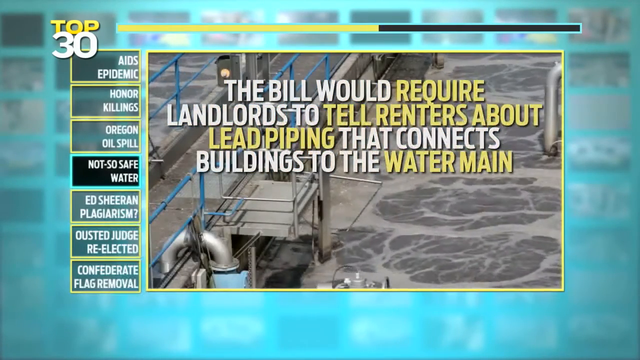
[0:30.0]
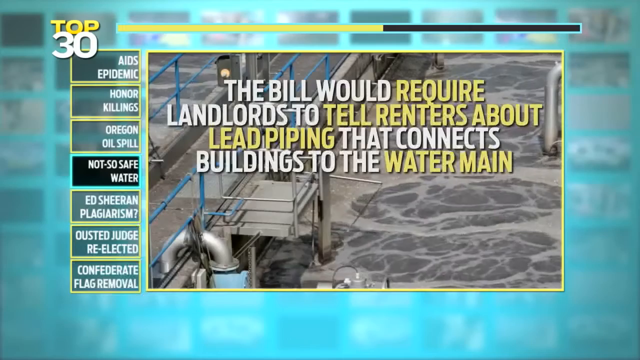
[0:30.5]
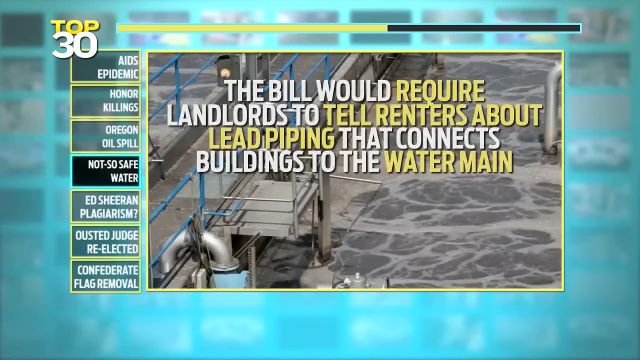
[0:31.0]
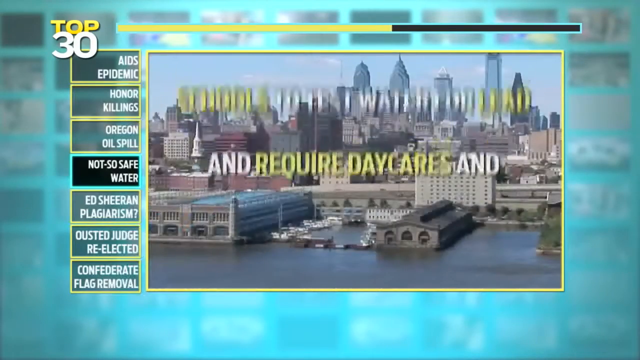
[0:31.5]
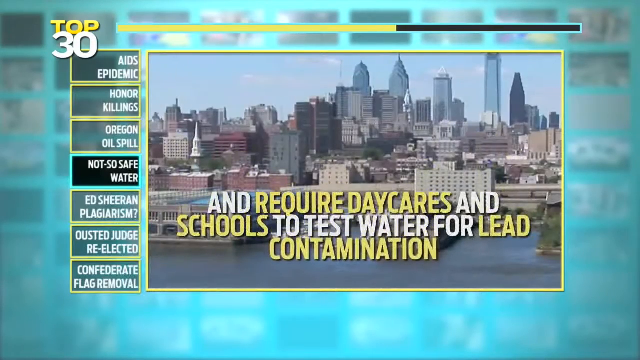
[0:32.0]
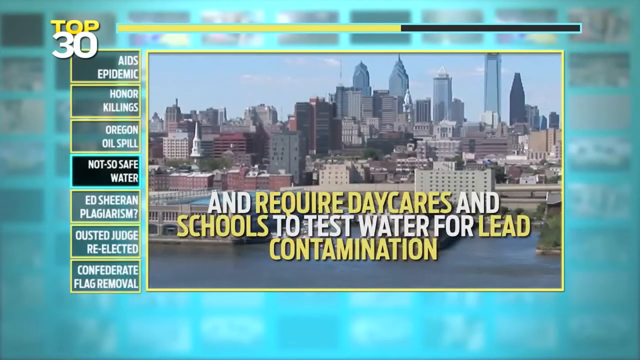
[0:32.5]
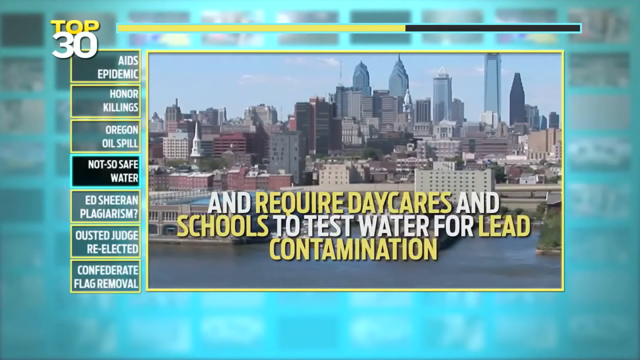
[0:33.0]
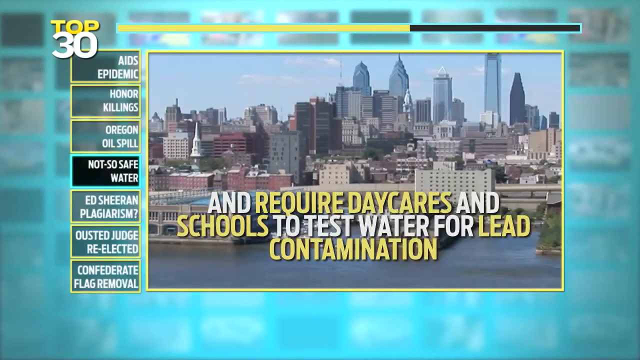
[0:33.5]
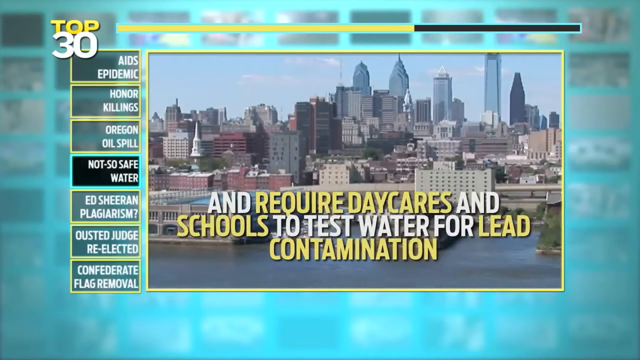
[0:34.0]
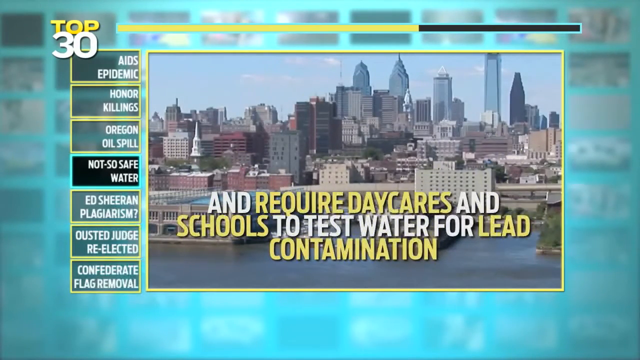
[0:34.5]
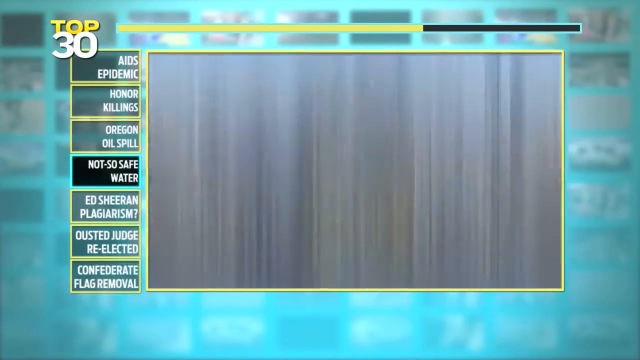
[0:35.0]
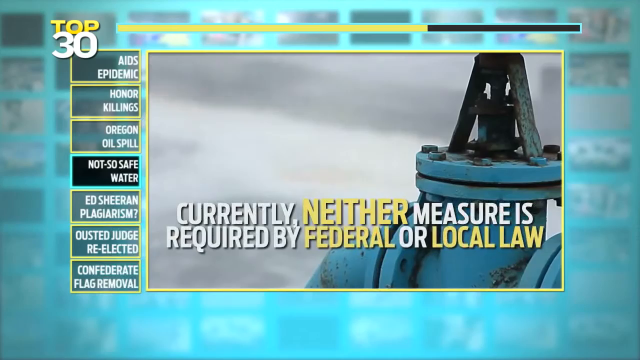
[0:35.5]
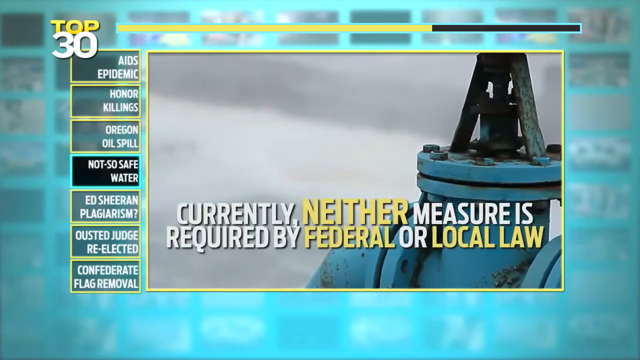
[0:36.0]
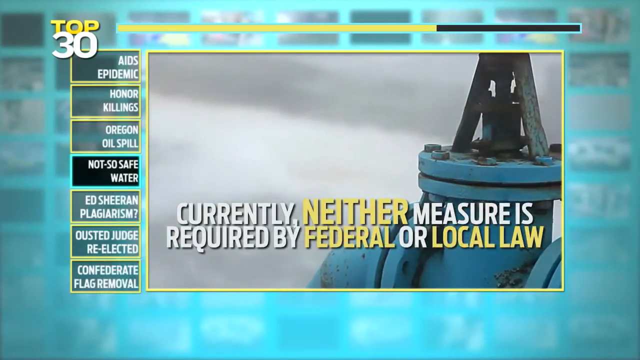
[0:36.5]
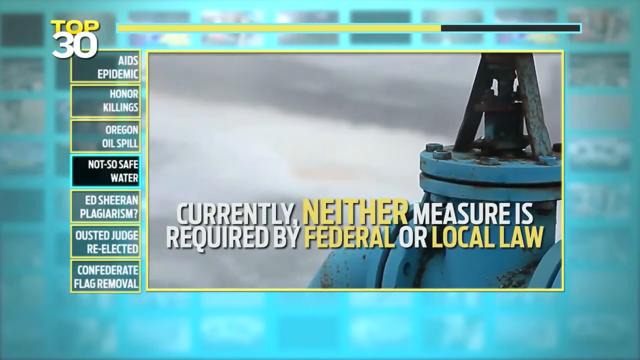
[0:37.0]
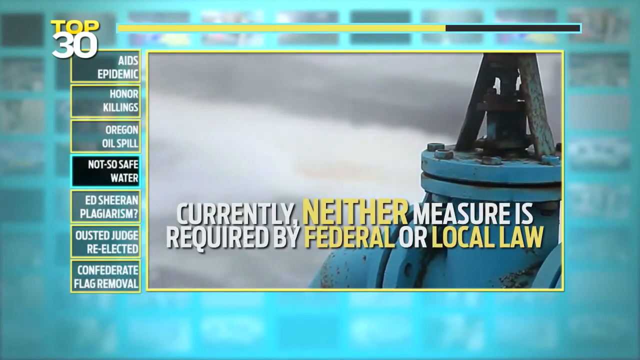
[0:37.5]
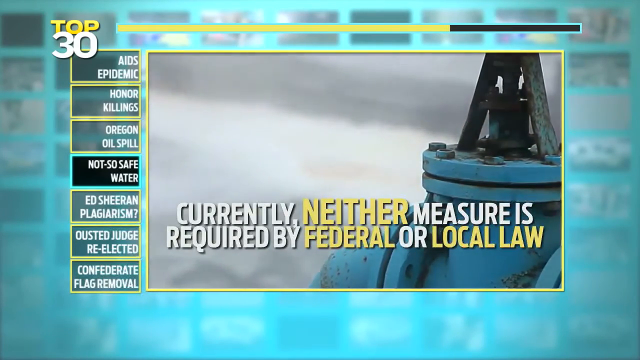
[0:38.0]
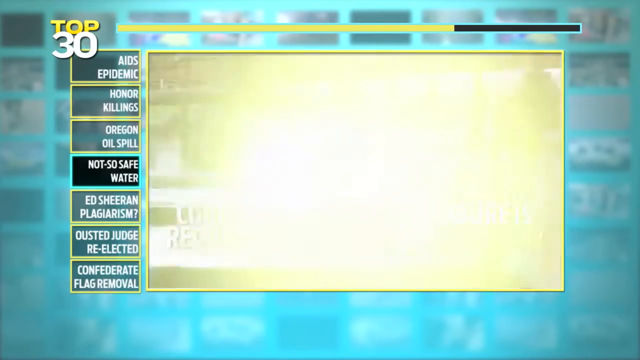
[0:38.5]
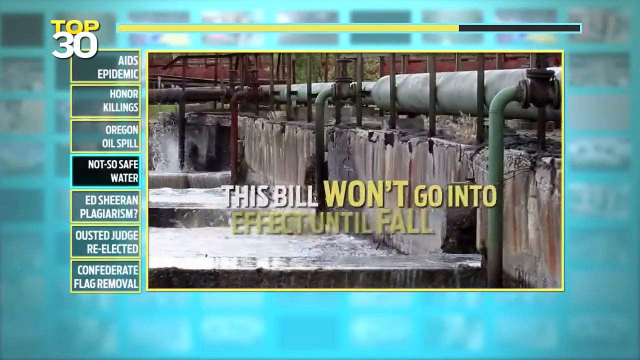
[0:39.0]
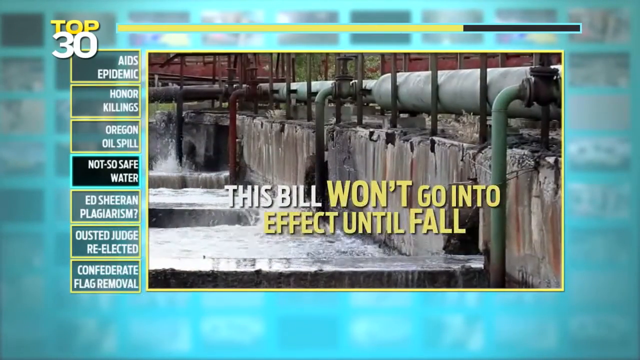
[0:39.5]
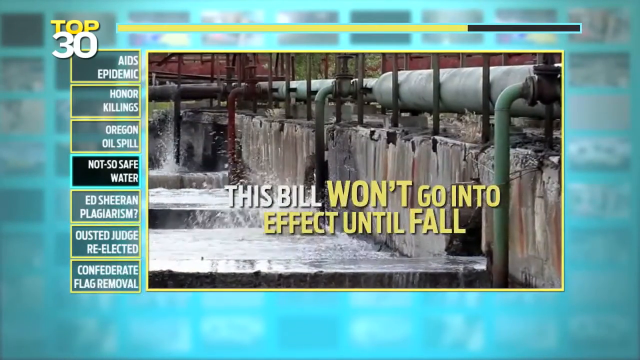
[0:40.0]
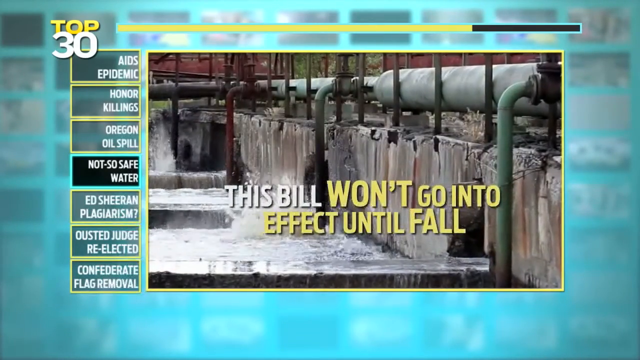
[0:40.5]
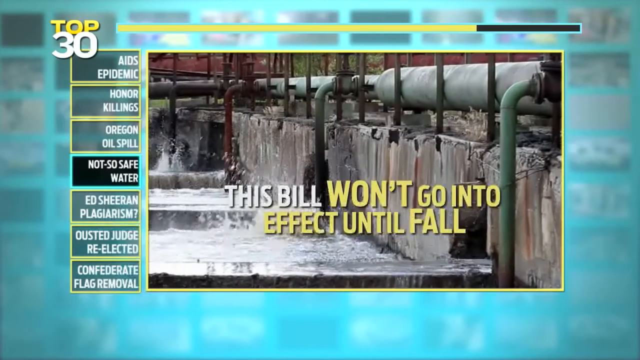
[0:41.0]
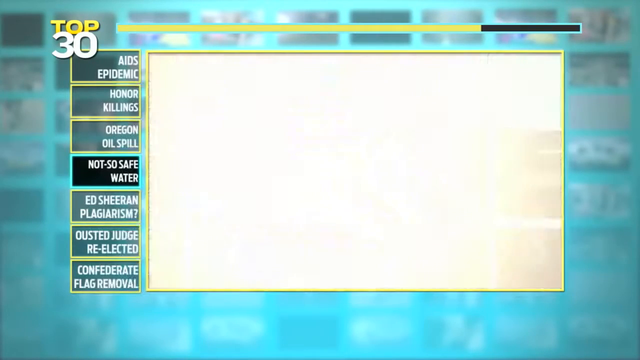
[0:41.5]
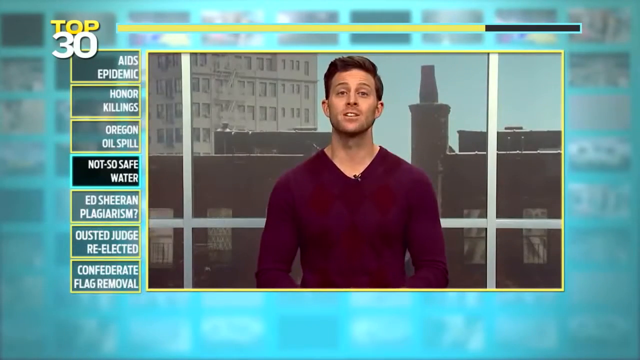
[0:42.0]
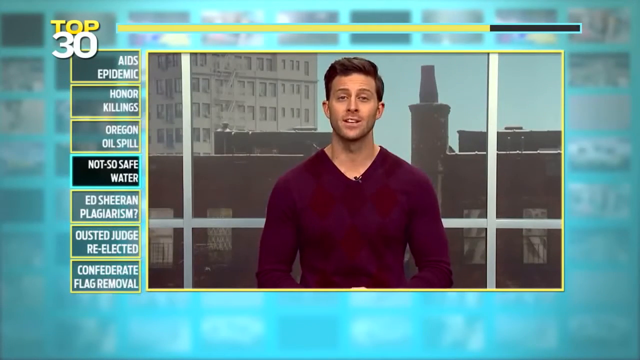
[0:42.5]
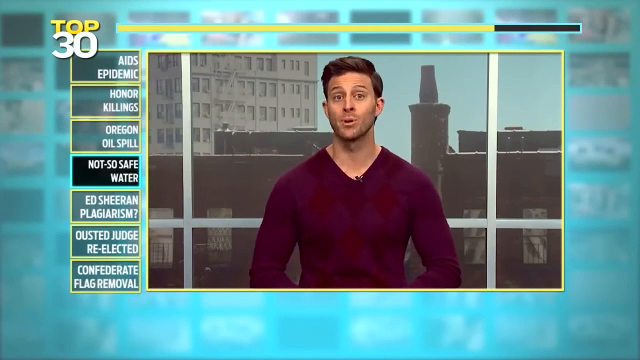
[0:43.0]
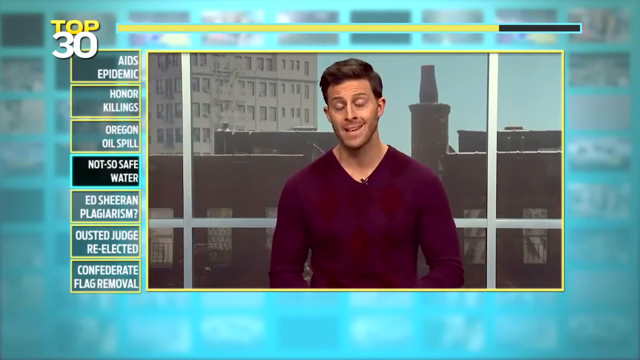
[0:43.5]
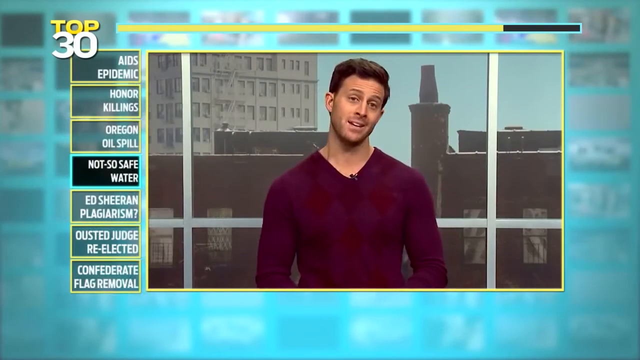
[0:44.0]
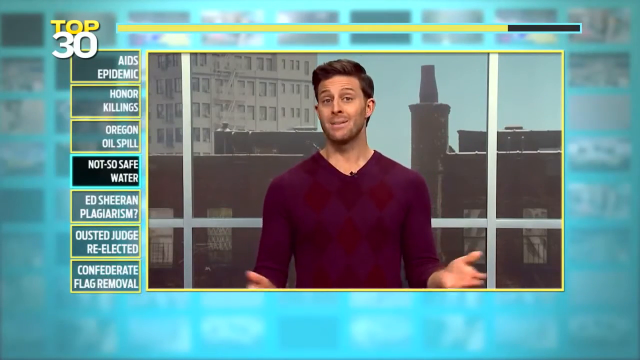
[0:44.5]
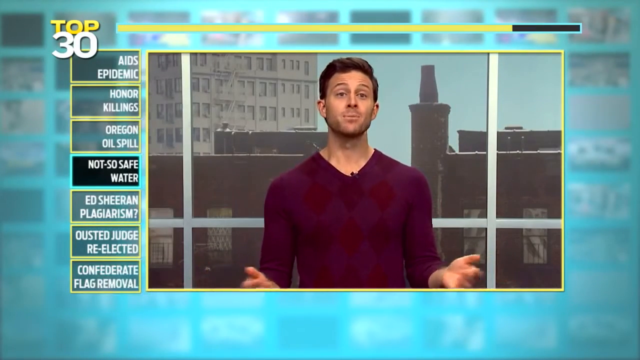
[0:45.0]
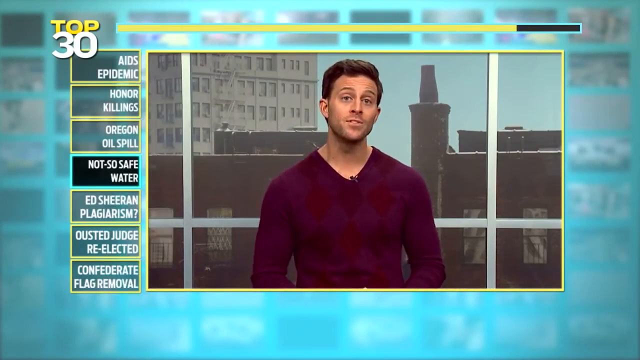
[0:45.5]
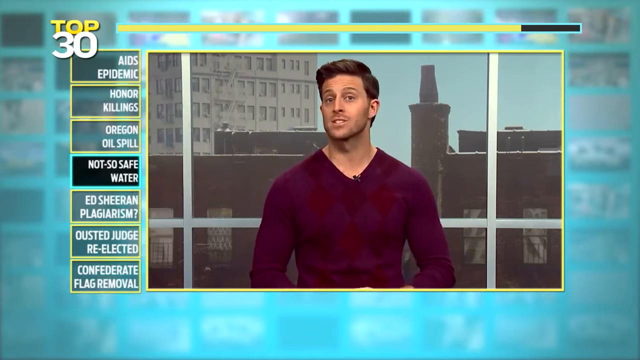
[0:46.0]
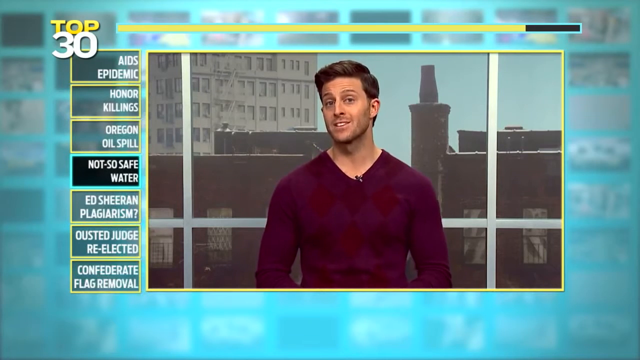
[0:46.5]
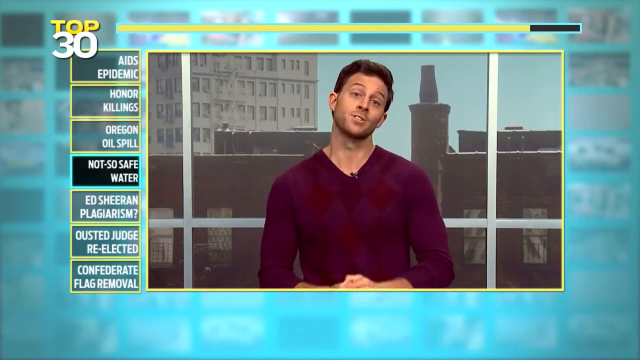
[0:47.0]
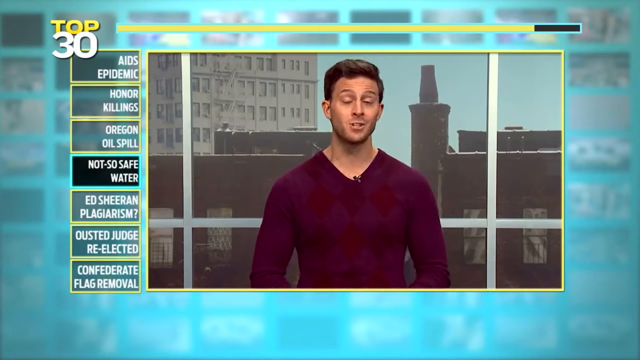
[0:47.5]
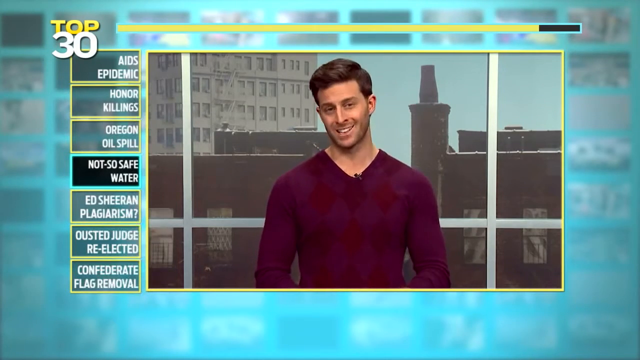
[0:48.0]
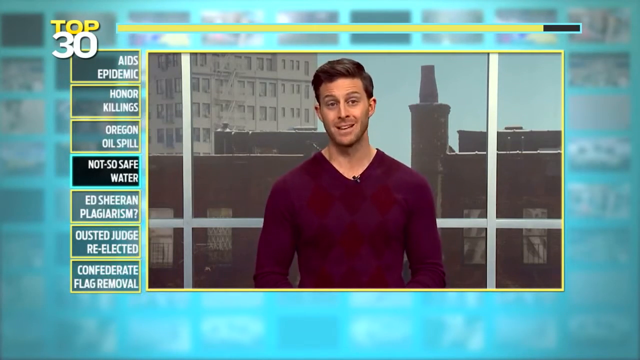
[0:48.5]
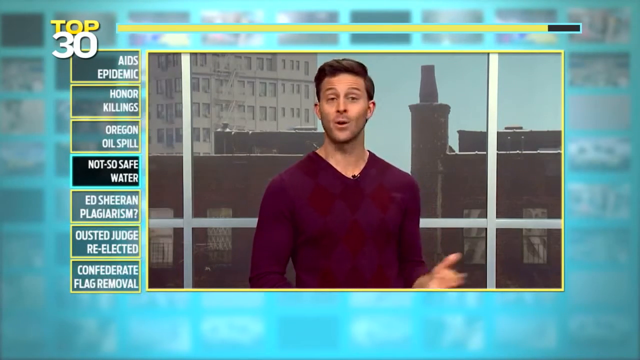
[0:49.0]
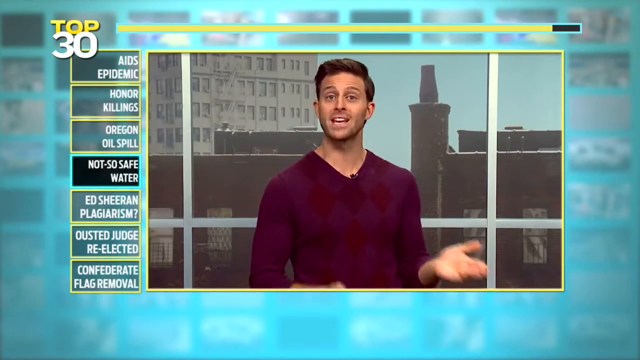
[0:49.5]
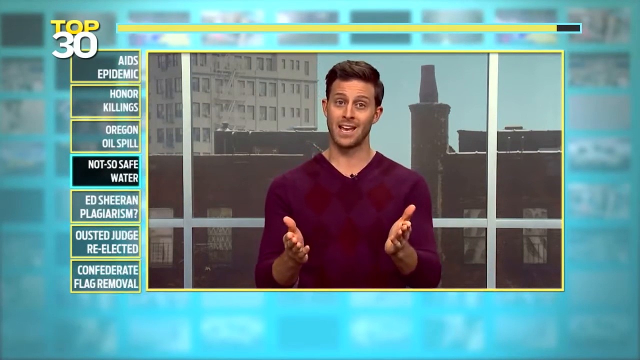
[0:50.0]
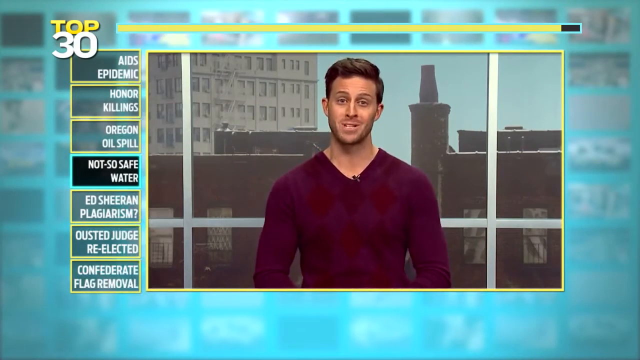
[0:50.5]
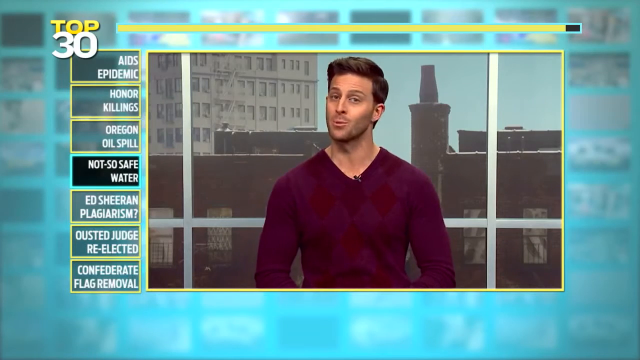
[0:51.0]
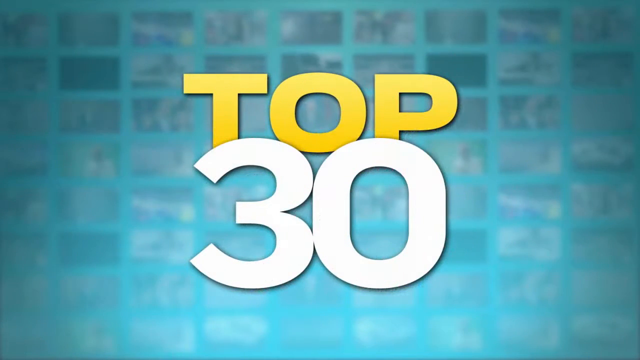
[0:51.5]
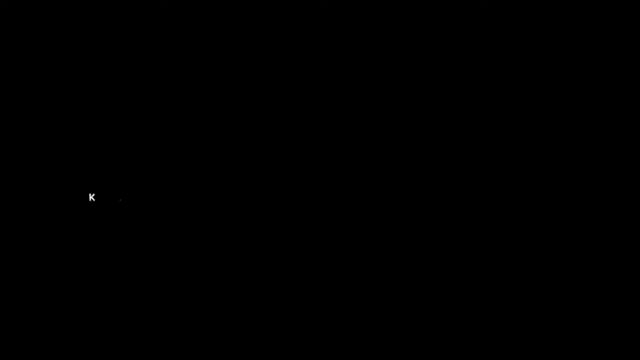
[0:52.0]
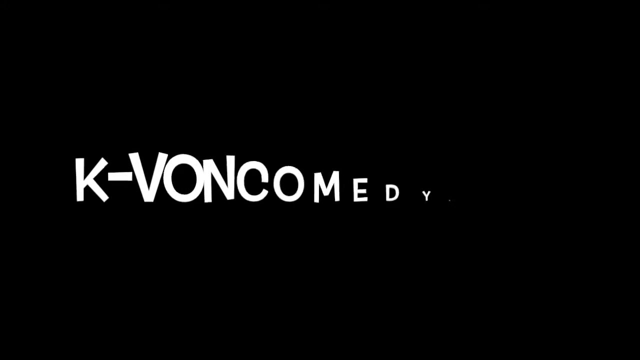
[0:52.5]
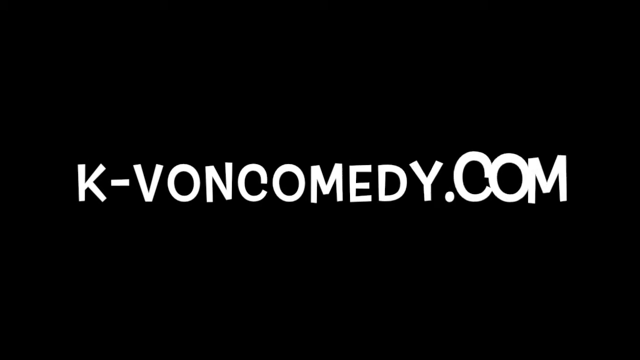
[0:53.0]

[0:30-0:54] The walkway above the water is made of silver-colored metal, and the railings look blue. That shot goes away, and a skyline appears in the background with overlaid text reading "and require daycares and schools to test water for lead contamination." Several skyscrapers are in the background, and a large body of water is in the foreground. Next is a video of a blue pipe, with overlaid text reading "currently, neither measure is required by federal or local law." More text follows: "this bill won't go into effect until fall." A concrete wall runs along the right, and down the middle there appear to be concrete steps with water spilling from one level to the next. Along the wall on the right, a pipe runs the length of the wall, and green pipes come out of it, bend downward at a 90-degree angle and go straight down. Water seems to be spewing out of one of the pipes. The video then returns to the newsroom, where the man in the purple sweater is speaking to the cameras. He holds both hands out to his sides with his palms up, then puts them back in front of his waist.